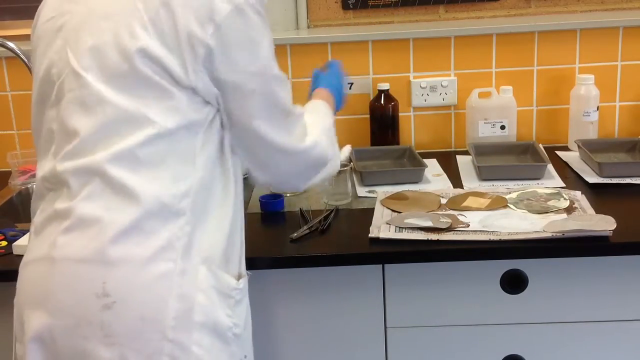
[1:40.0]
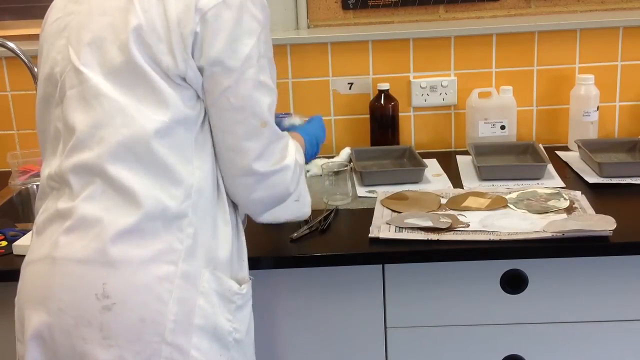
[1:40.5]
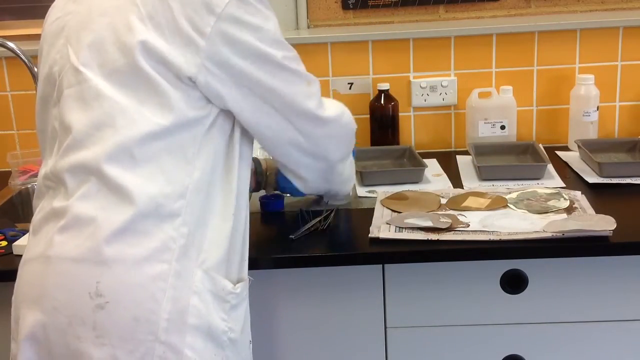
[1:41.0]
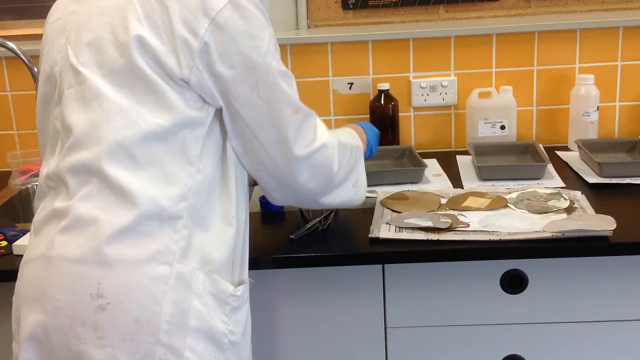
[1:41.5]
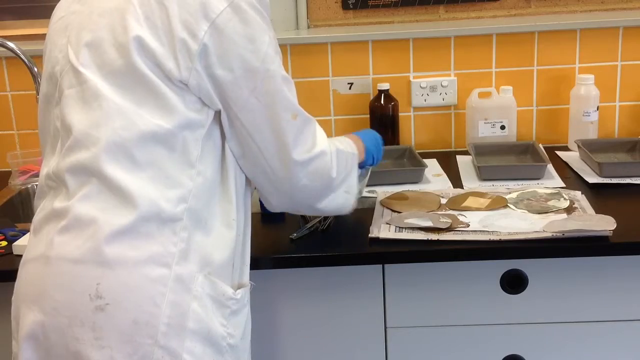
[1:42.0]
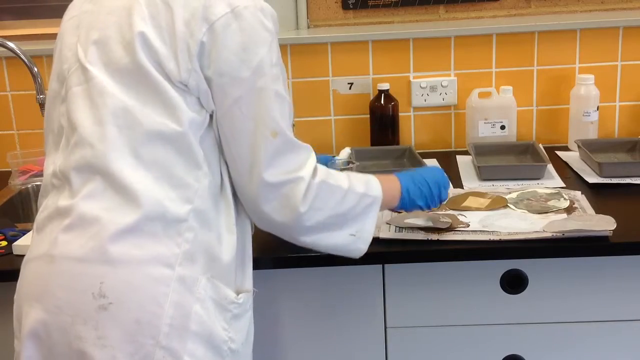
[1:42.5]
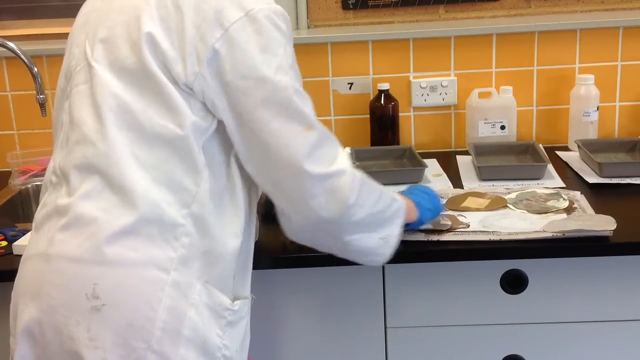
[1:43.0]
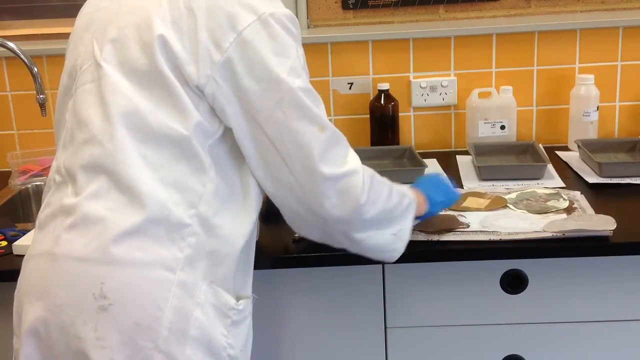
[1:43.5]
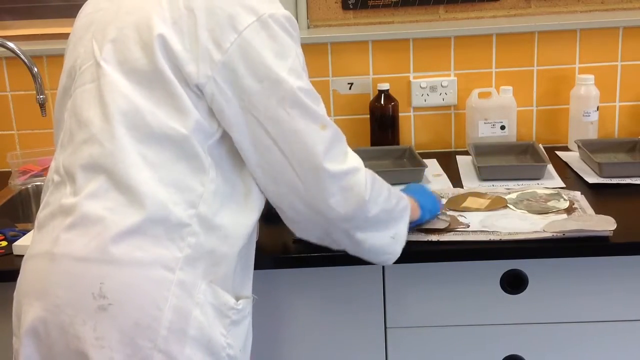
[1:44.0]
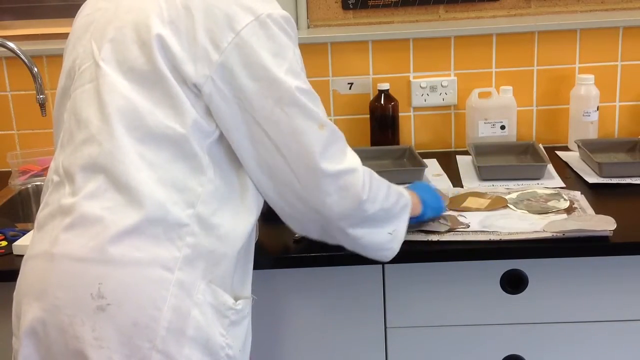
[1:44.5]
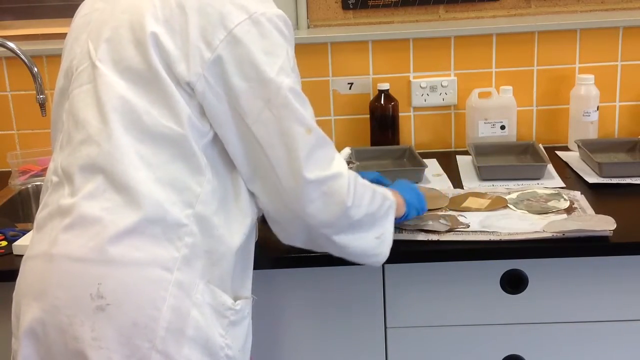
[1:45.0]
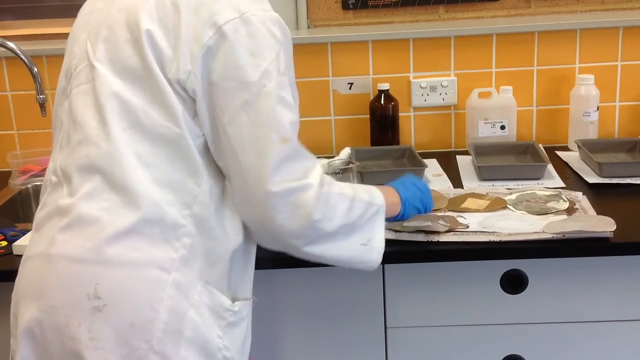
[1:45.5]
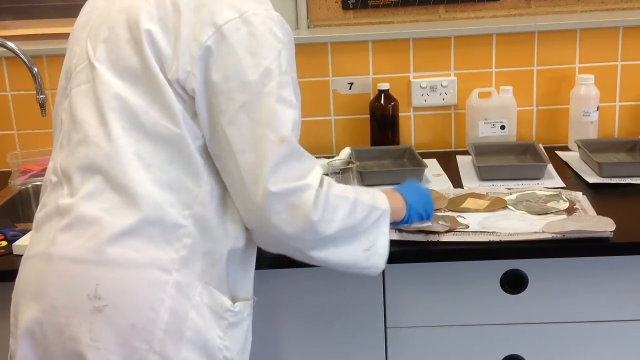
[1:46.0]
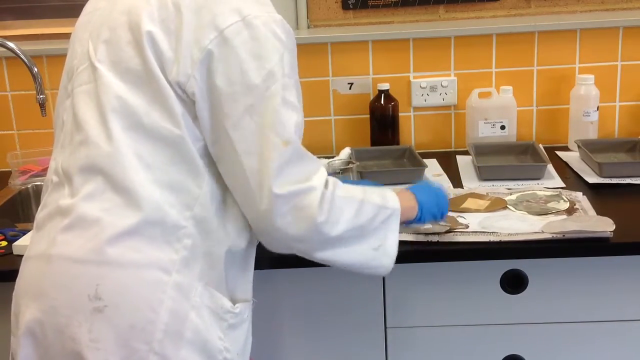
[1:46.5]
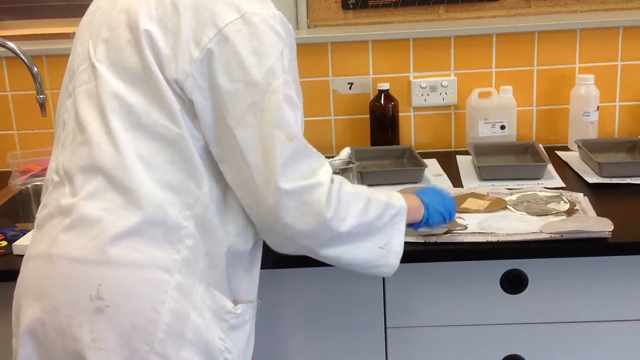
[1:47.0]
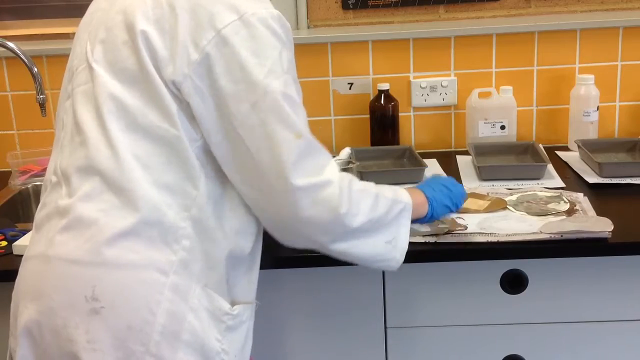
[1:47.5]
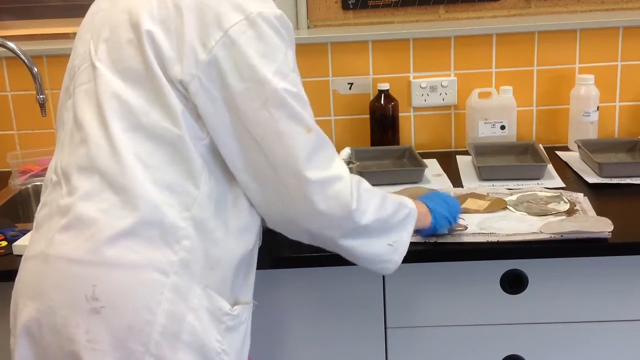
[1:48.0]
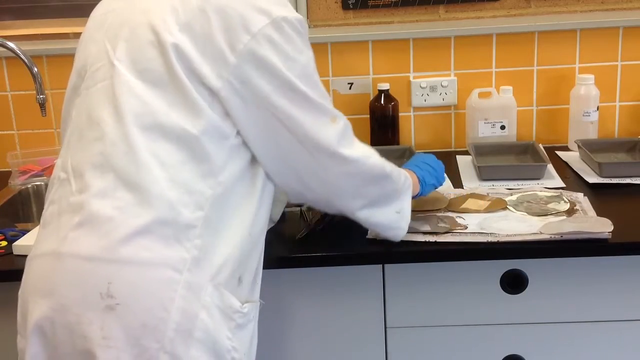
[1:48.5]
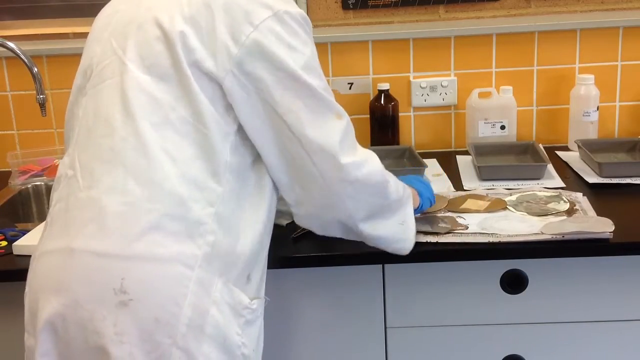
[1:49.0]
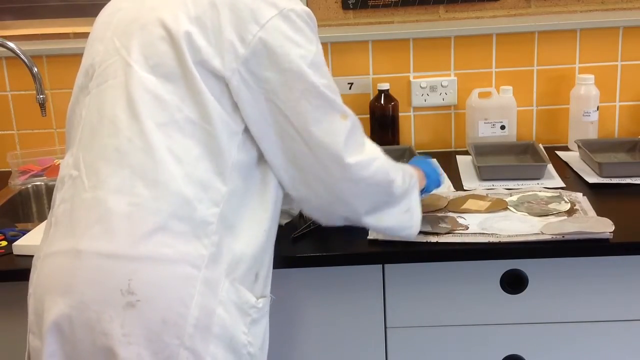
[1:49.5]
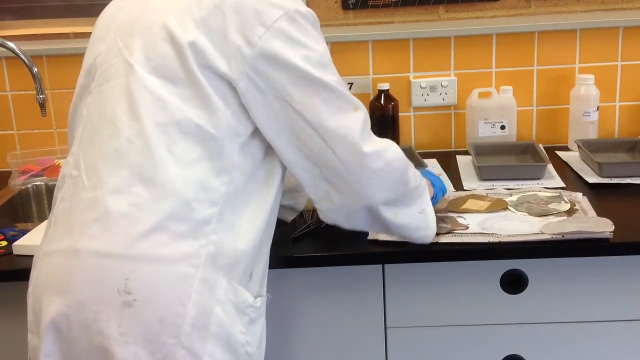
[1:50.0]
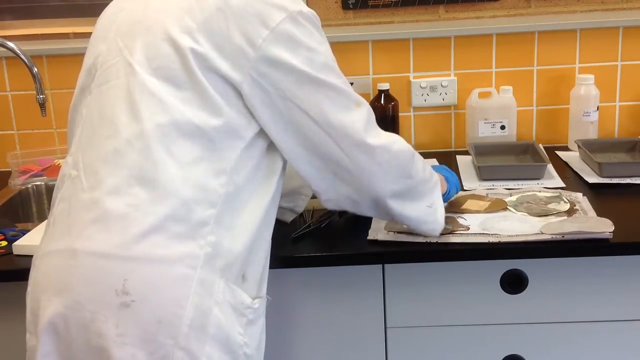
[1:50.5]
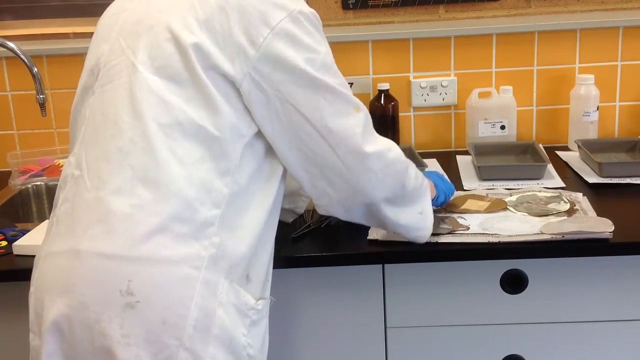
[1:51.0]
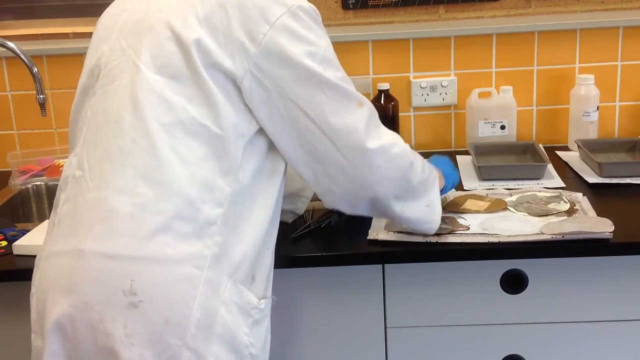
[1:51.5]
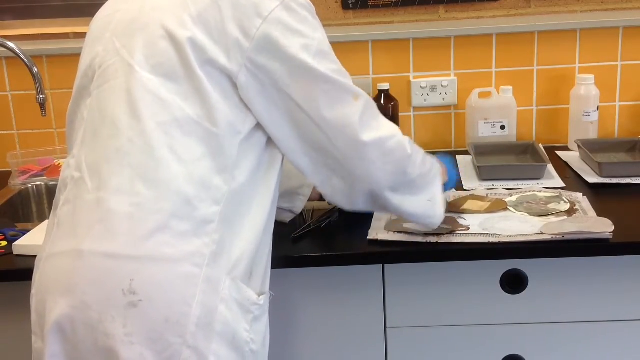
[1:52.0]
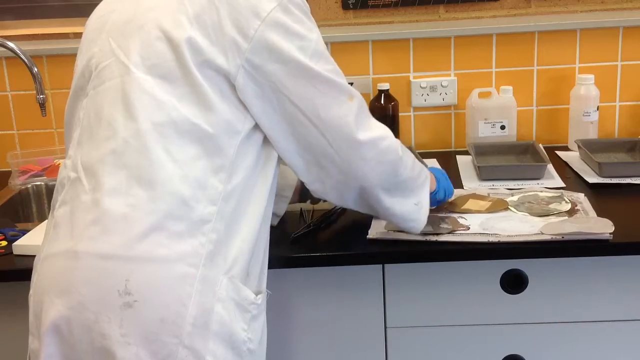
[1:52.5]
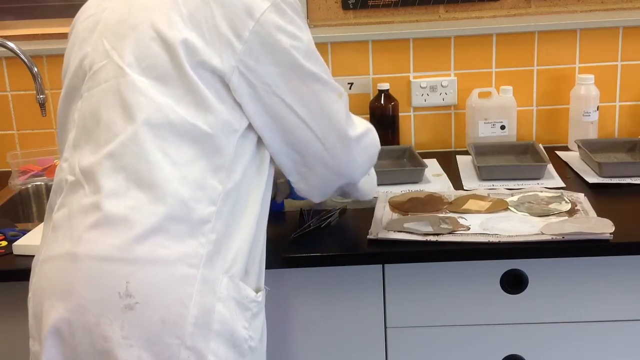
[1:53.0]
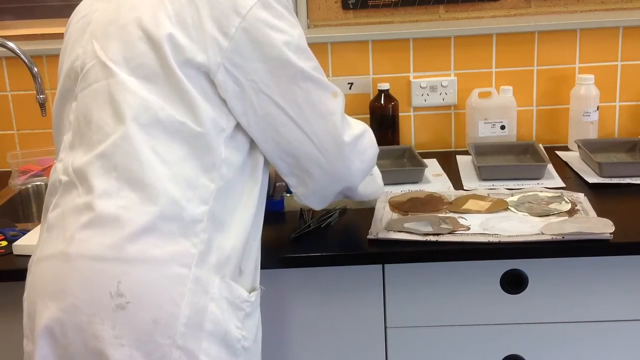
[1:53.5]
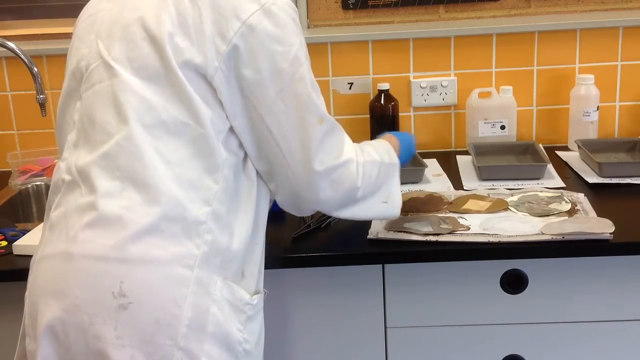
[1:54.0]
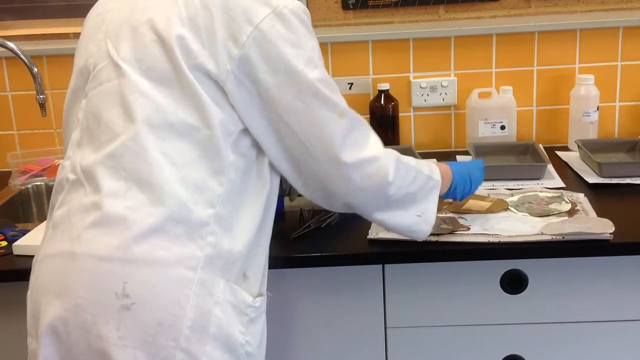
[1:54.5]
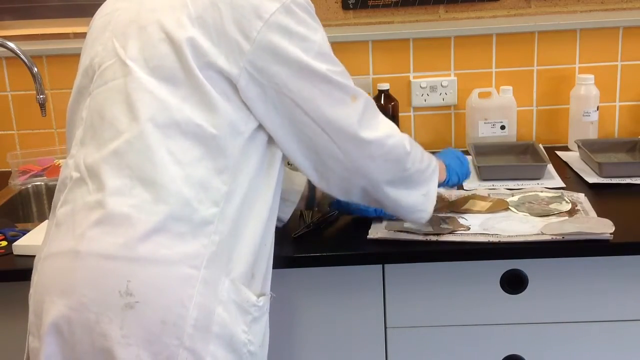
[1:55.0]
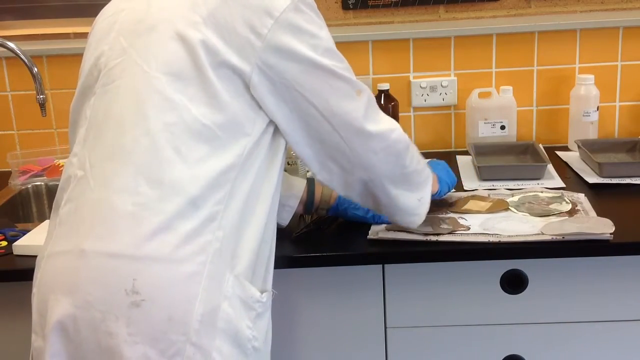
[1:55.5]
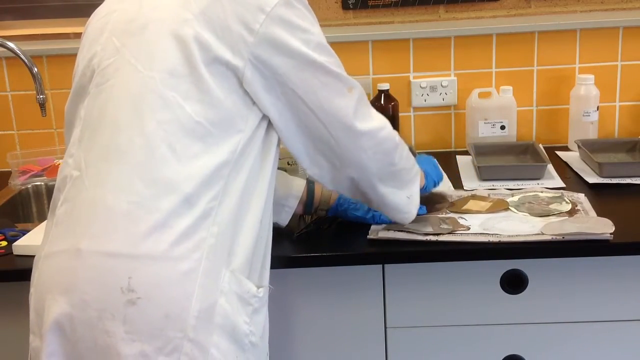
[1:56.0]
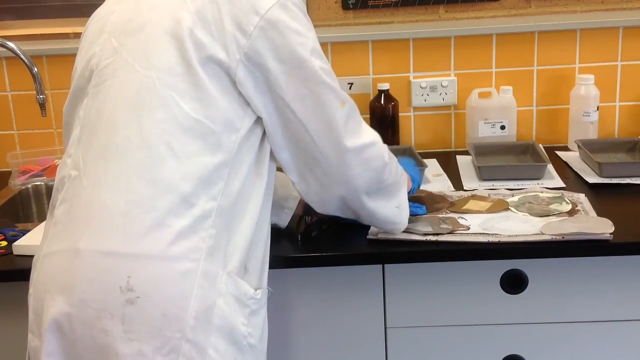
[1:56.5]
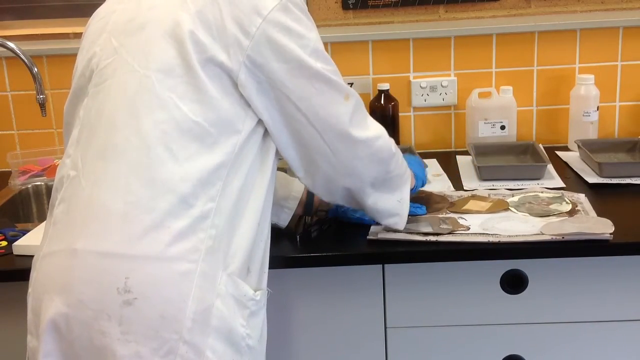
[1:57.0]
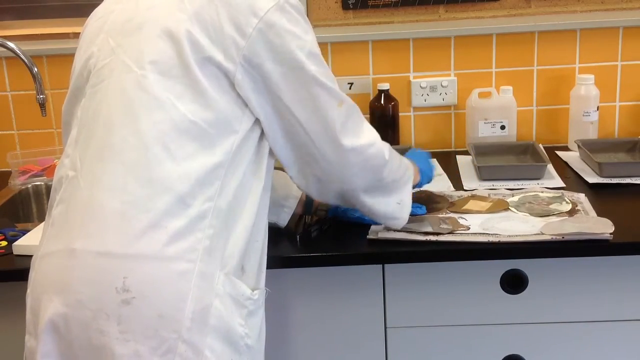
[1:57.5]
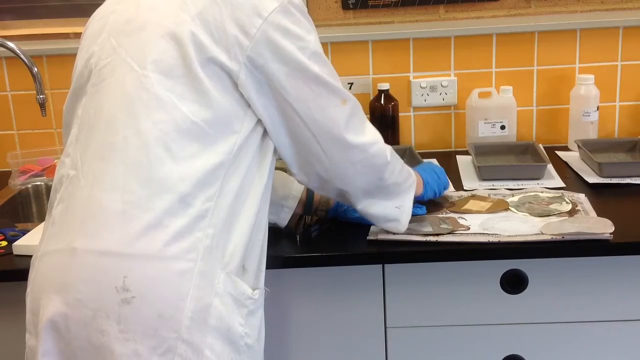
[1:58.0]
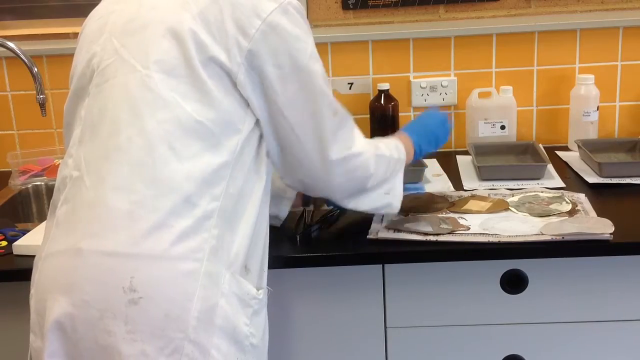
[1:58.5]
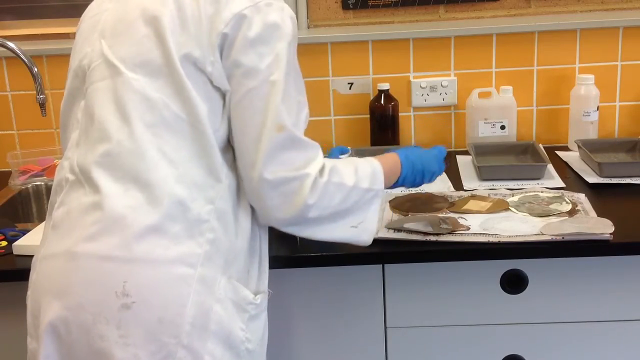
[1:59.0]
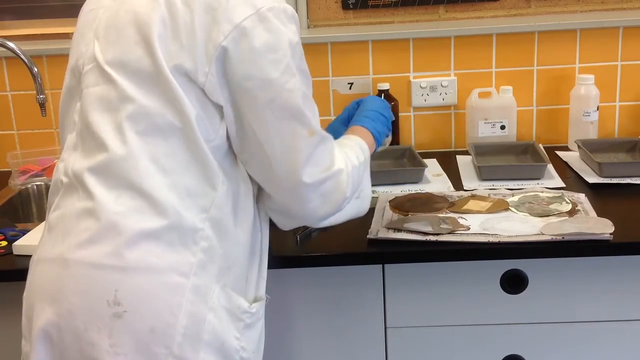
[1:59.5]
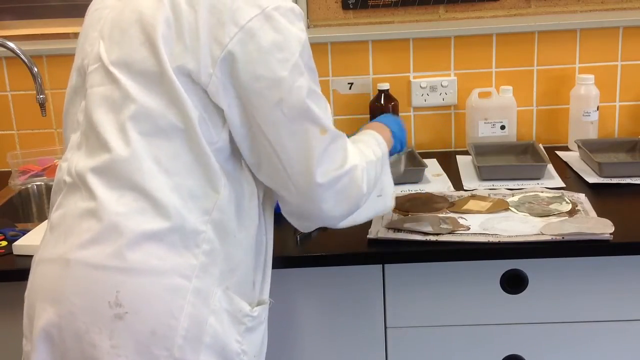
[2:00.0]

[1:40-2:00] A person stands in front of a brown countertop with blue cabinets at the bottom of the screen. She wears a white lab coat and blue gloves and stuffs cotton down into a glass beaker. Holding some brown circular pieces of paper, which look like cardboard, in her left hand, she reaches over with her right hand and wipes them off with the cotton in her right hand. In the background are three gray baking pans; the one furthest to the left is in the center of the screen, with a brown glass bottle with a white cap behind it against the orange wall. To the right is a baking pan with a white jug behind it, and to the right of that a baking pan with a white plastic bottle behind it. All the baking pans look like they are sitting on white glass plates or pieces of newspaper.